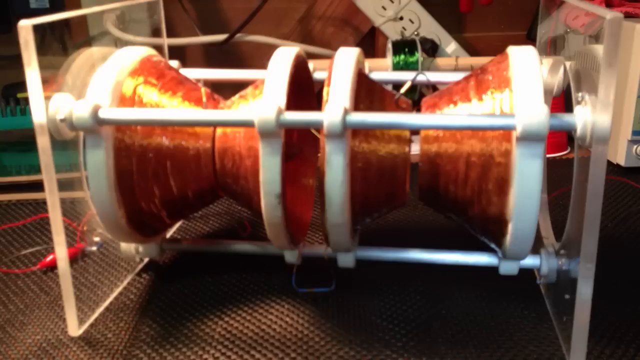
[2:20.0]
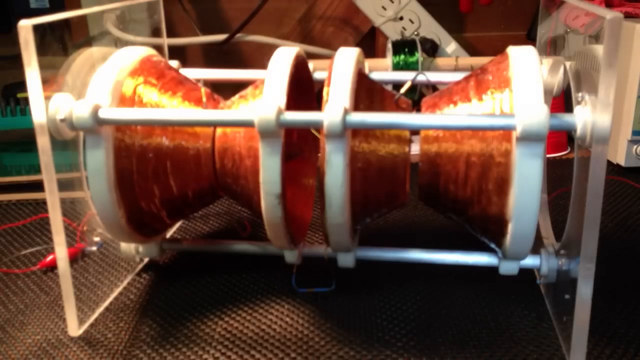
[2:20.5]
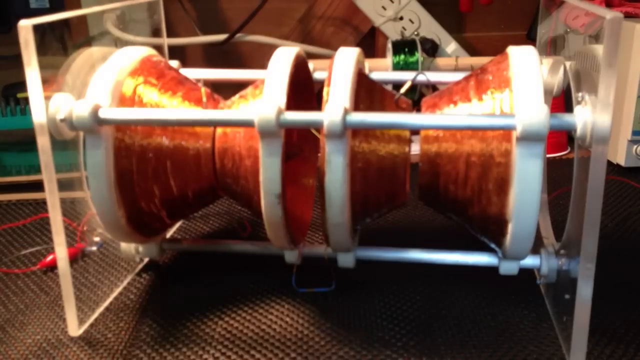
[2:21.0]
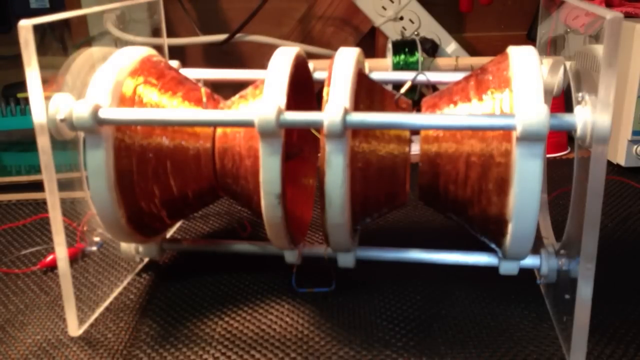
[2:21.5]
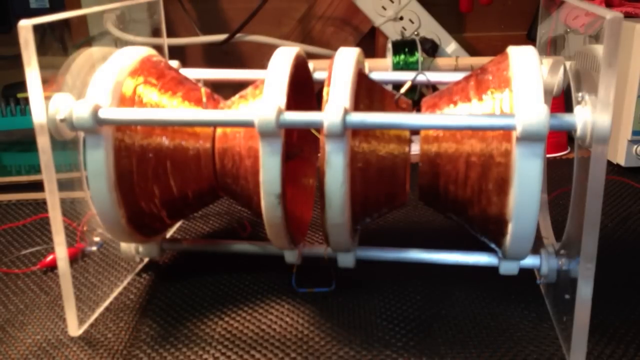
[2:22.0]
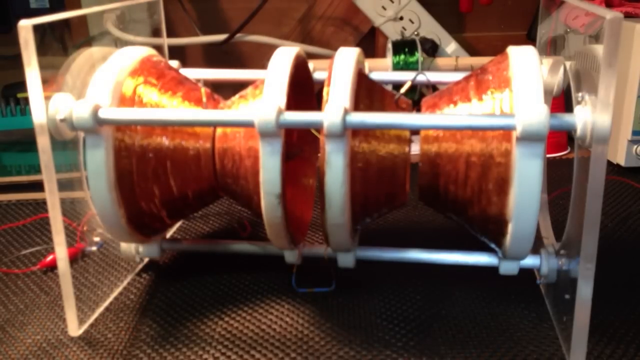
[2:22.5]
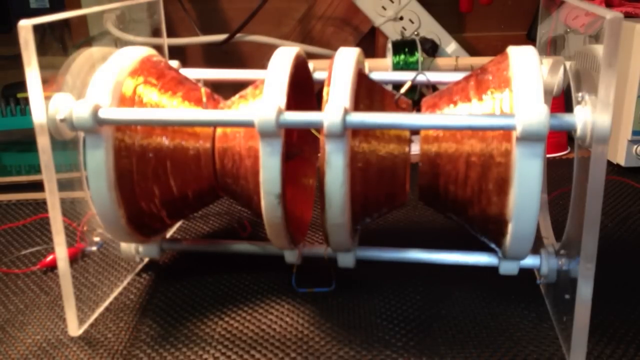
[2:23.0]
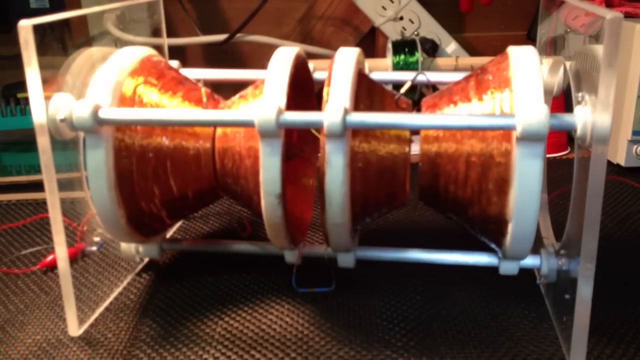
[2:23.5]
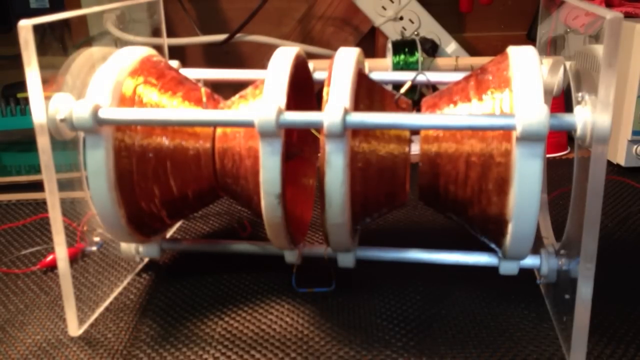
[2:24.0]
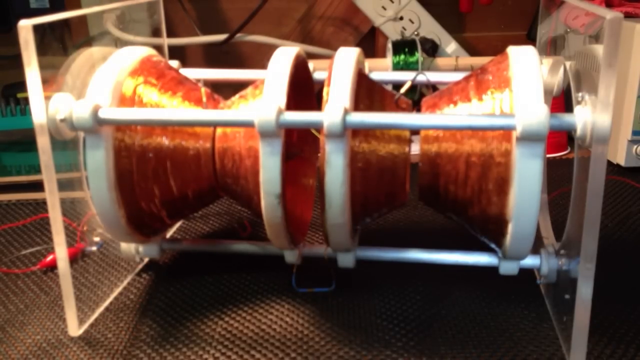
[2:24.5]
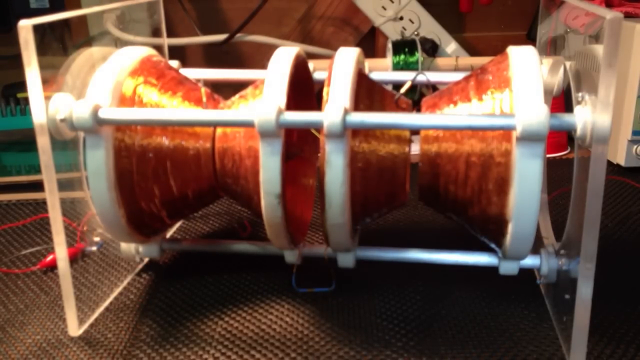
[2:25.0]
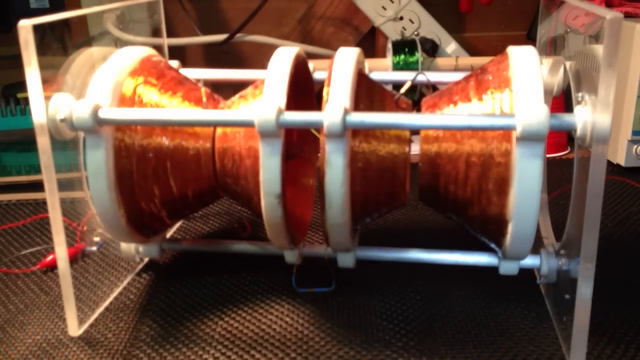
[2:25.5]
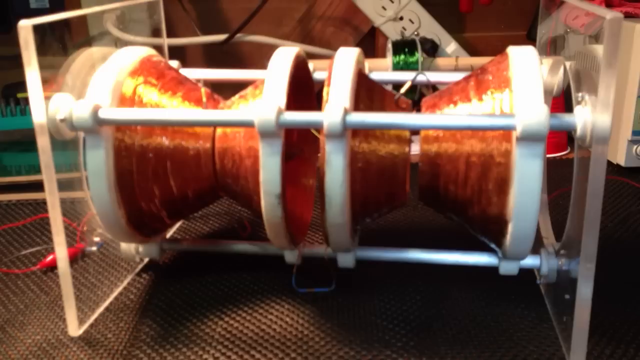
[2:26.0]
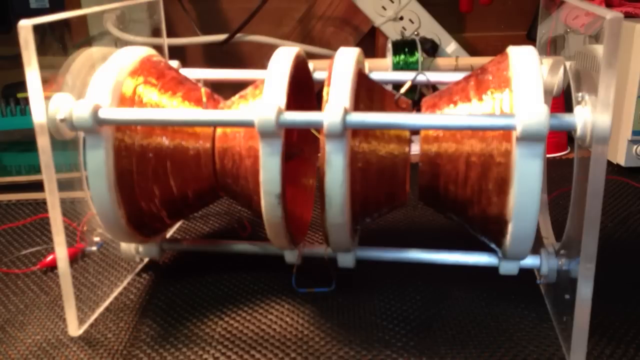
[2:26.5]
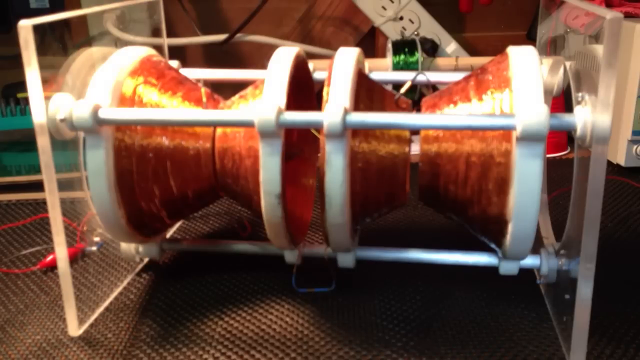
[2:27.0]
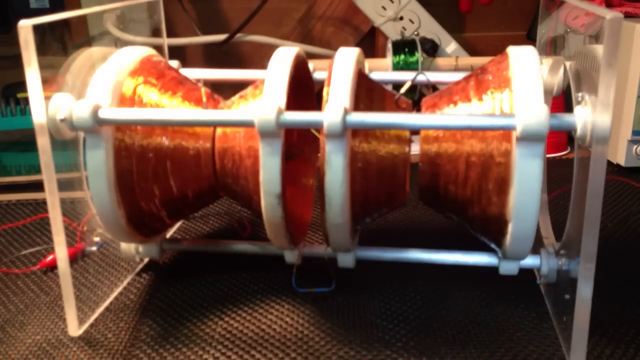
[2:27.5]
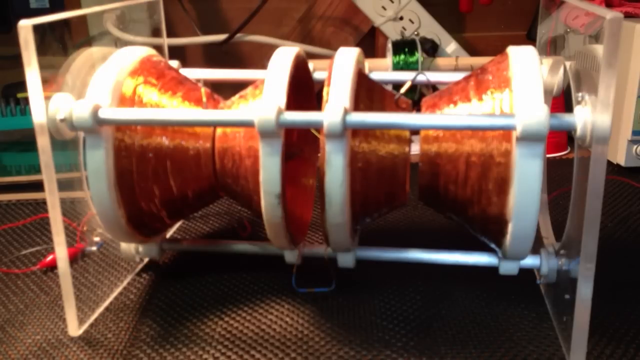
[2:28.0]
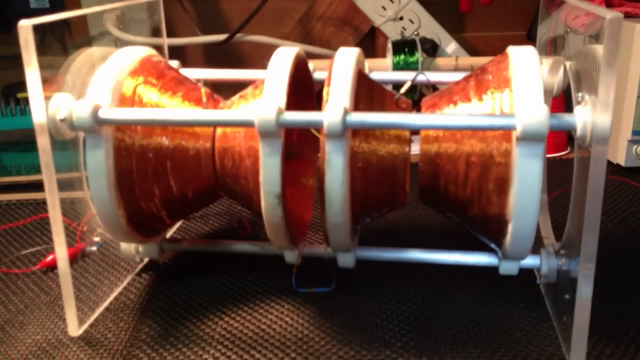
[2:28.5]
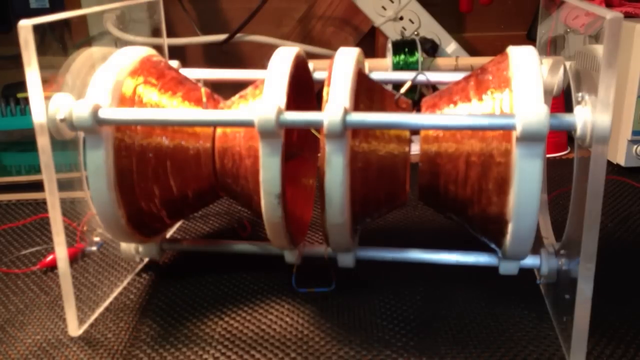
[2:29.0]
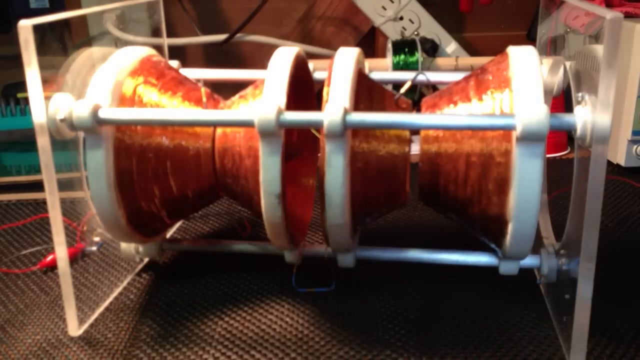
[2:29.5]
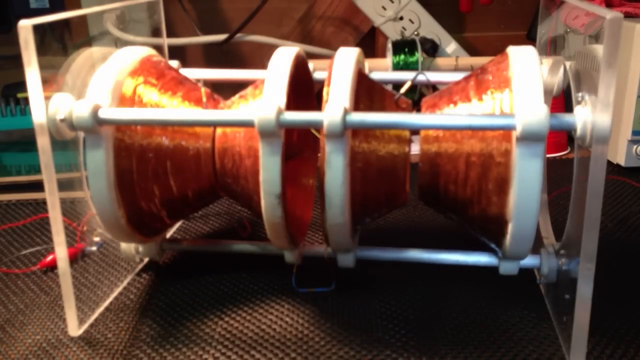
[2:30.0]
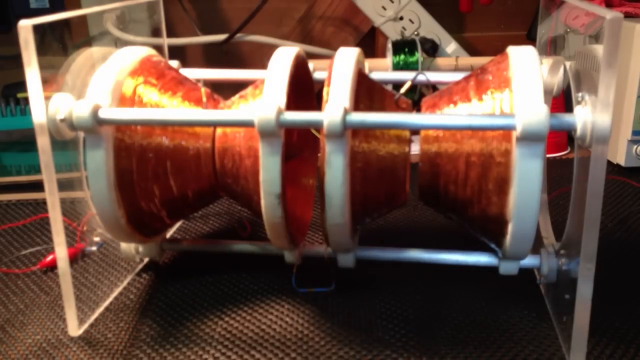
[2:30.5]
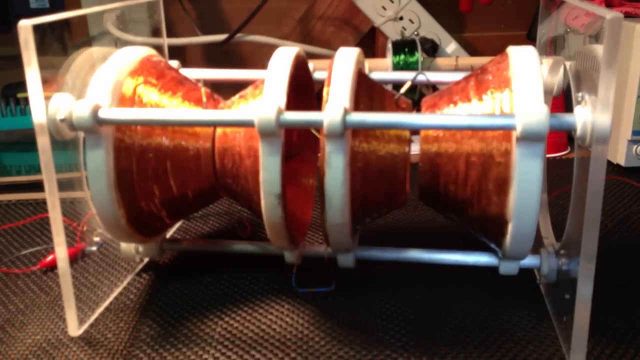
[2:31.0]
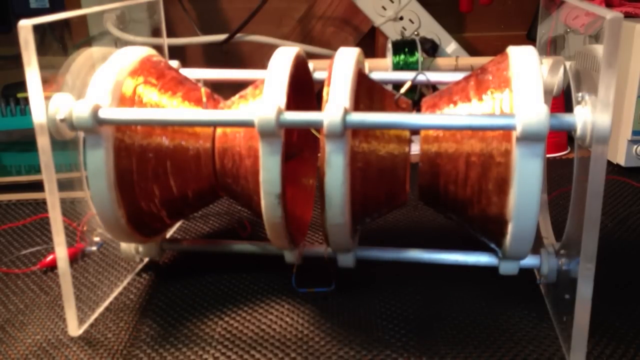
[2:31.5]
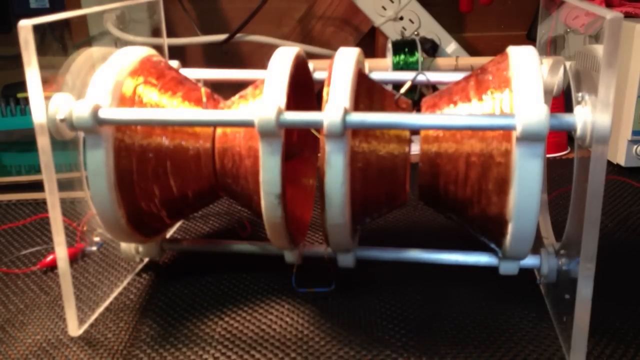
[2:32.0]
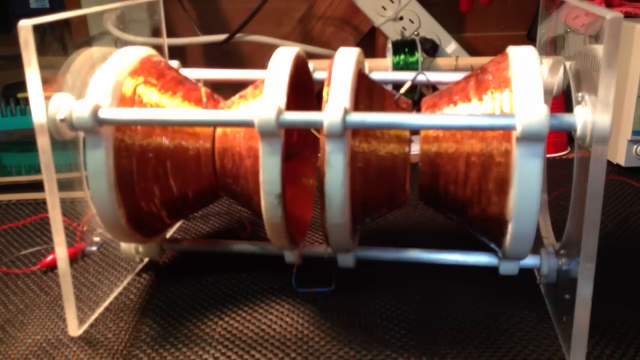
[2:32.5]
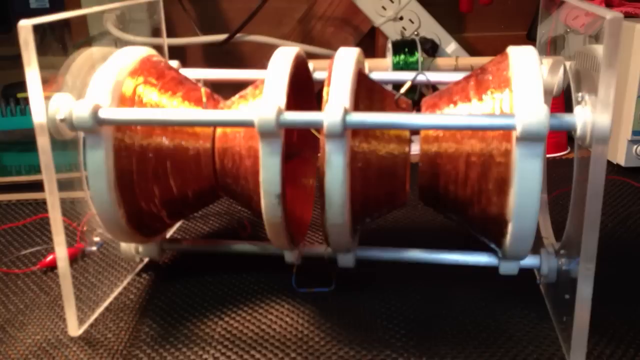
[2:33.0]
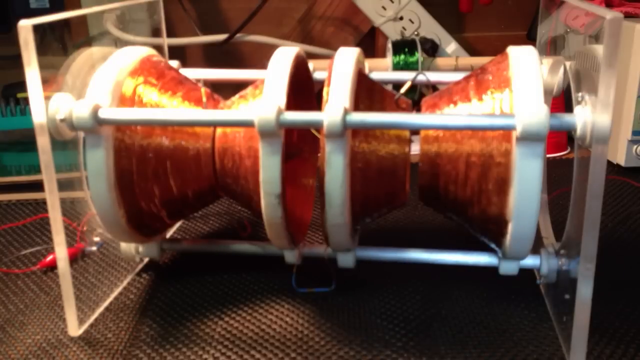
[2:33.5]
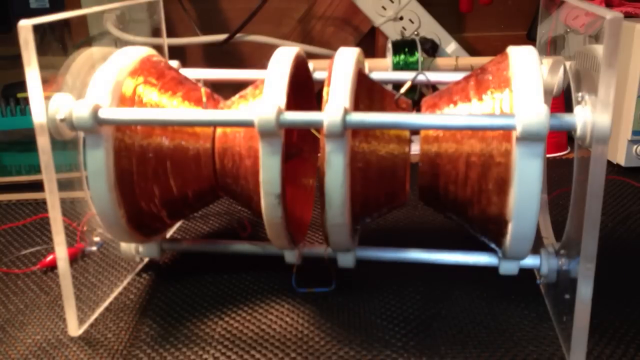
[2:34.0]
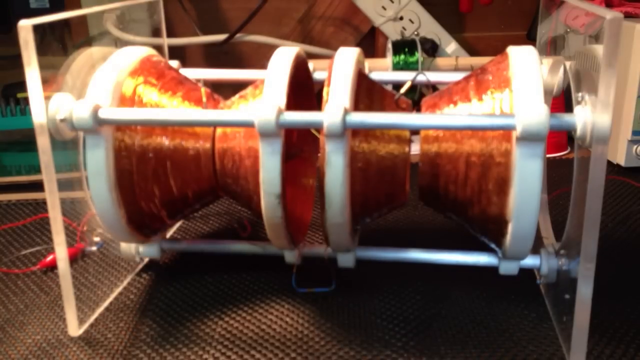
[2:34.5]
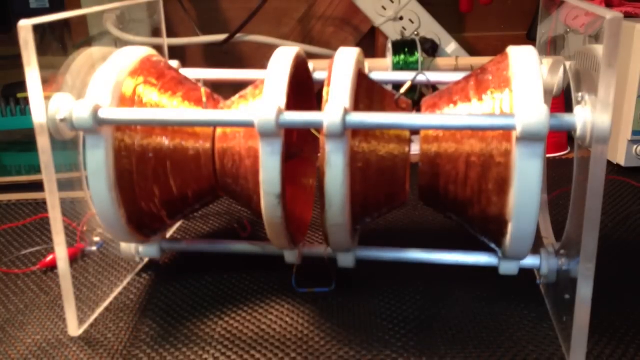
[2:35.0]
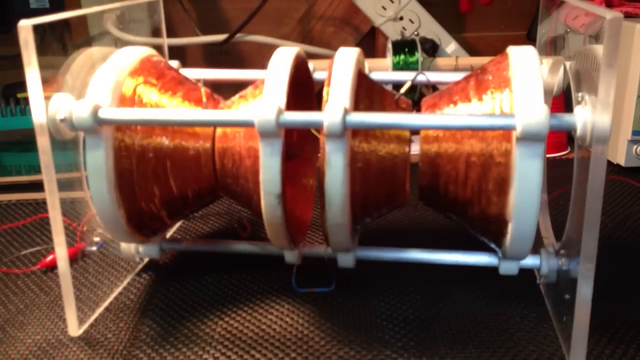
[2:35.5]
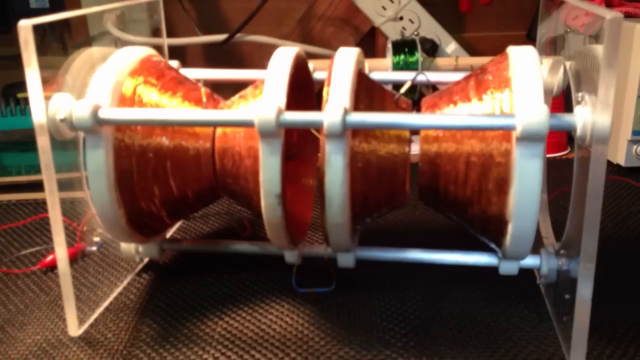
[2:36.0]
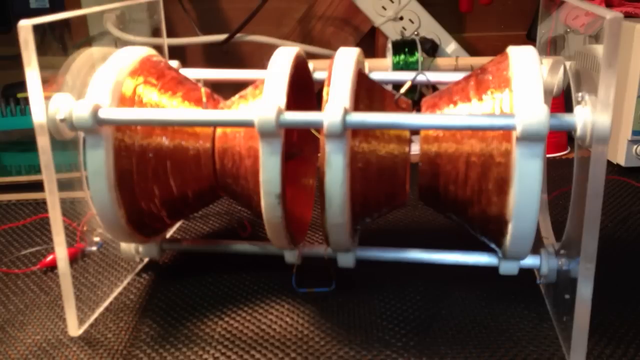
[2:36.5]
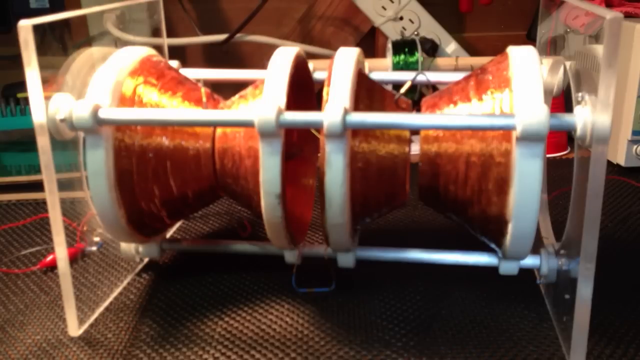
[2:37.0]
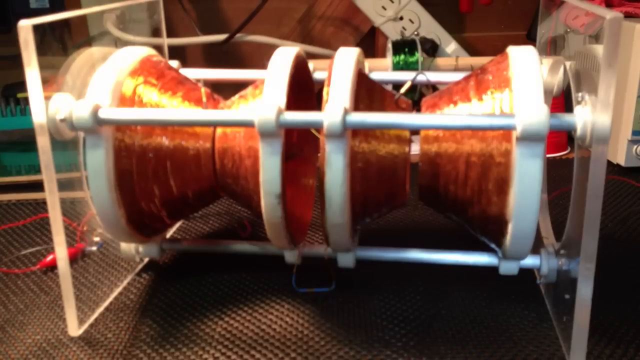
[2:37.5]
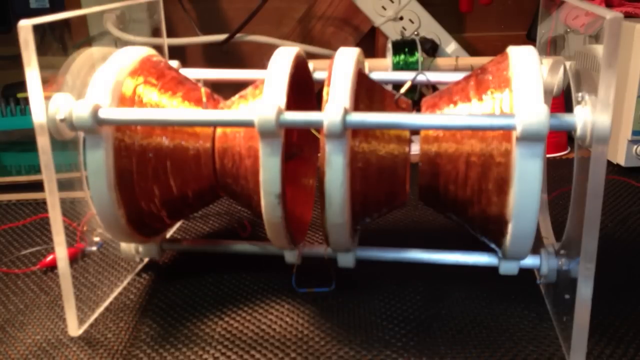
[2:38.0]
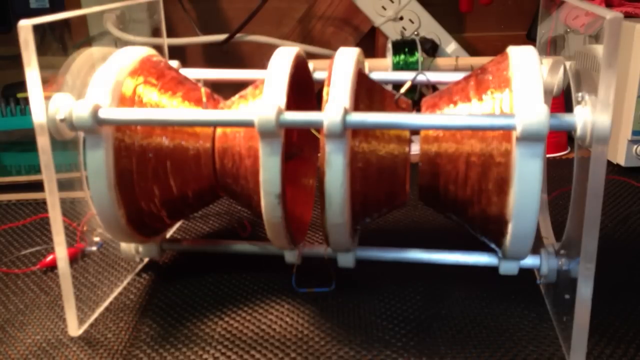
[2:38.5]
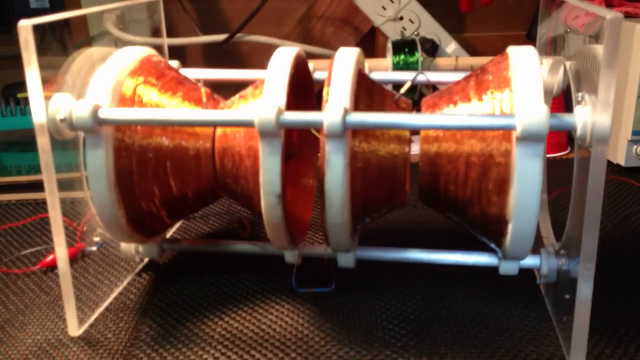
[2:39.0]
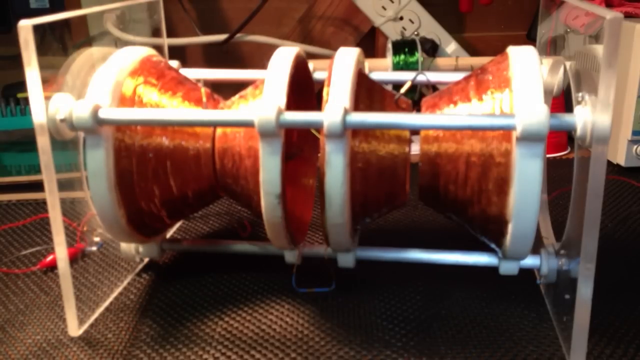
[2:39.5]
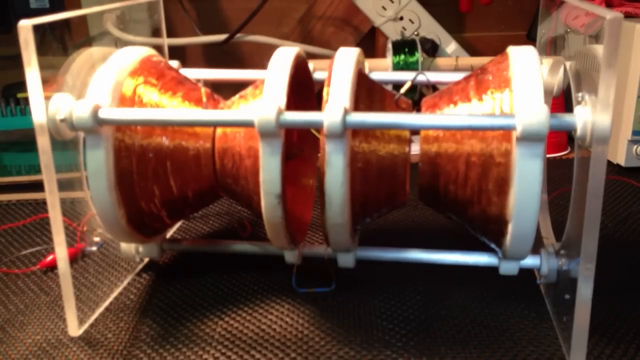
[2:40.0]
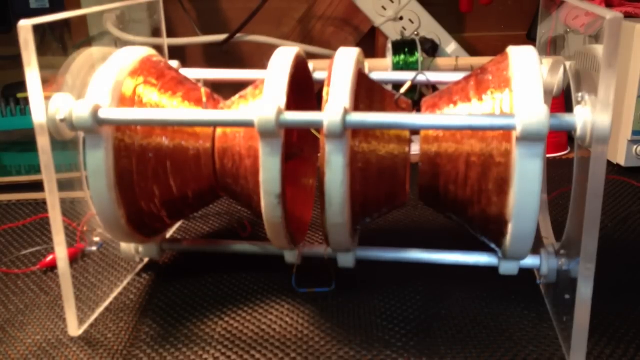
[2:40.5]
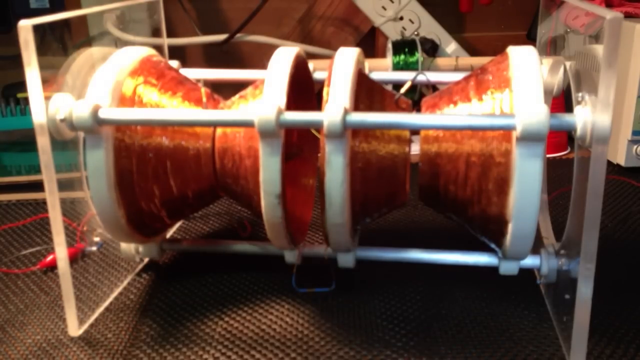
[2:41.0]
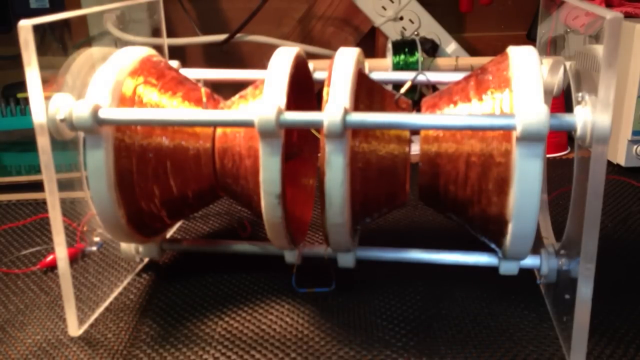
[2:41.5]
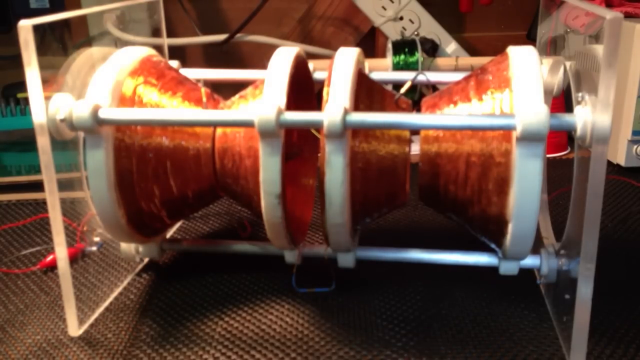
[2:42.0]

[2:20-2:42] The apparatus stays in the same position and nothing else moves. There are slight lighting variations and shadows as he moves his hand or body in the way of the light source, but otherwise there is no motion.